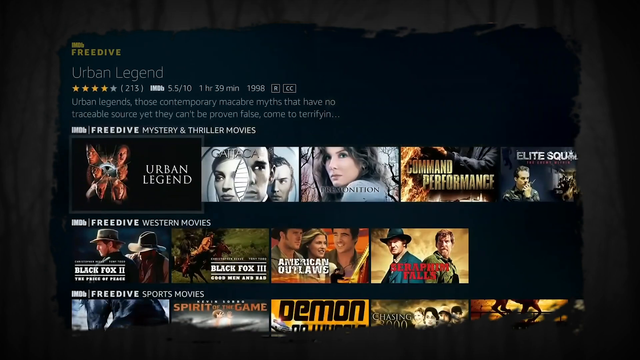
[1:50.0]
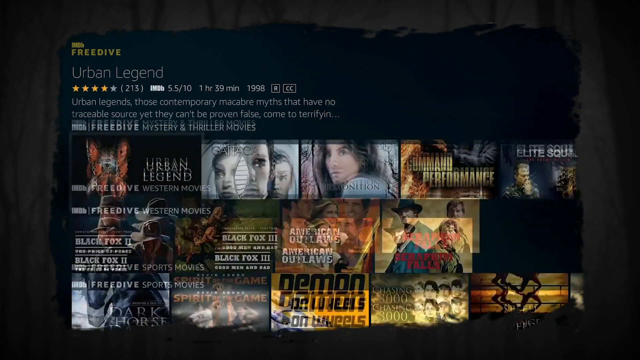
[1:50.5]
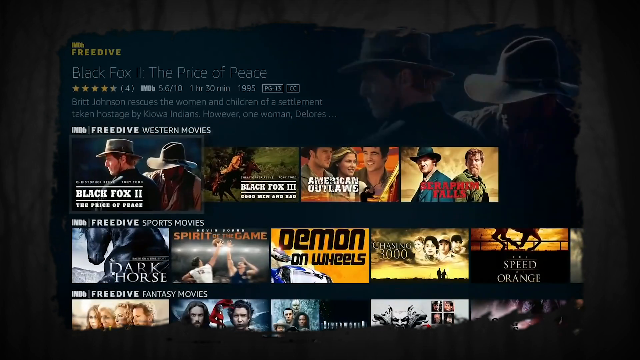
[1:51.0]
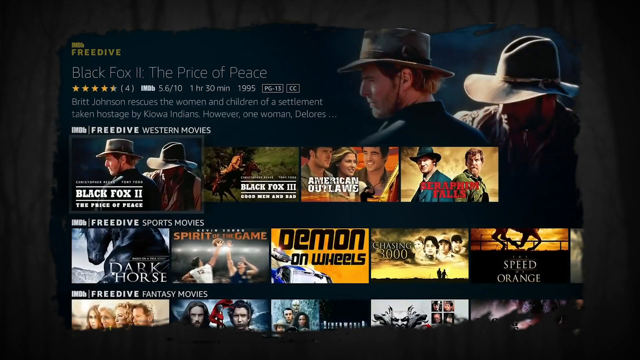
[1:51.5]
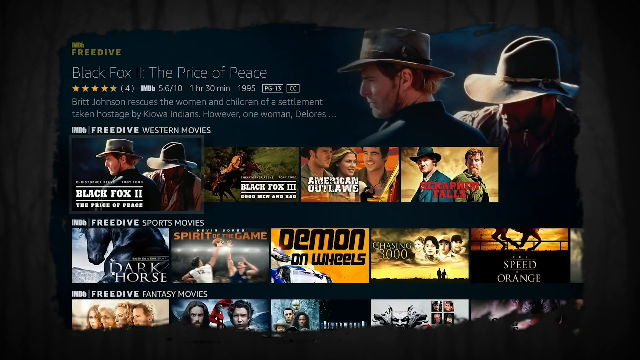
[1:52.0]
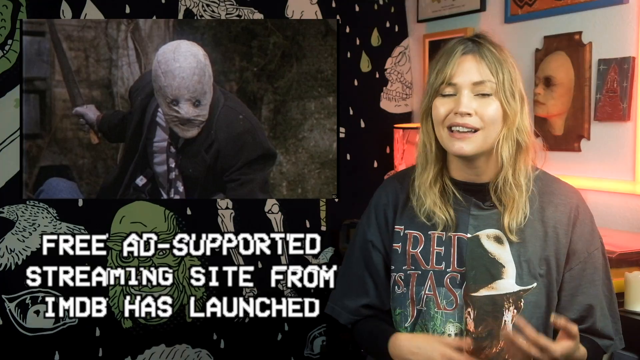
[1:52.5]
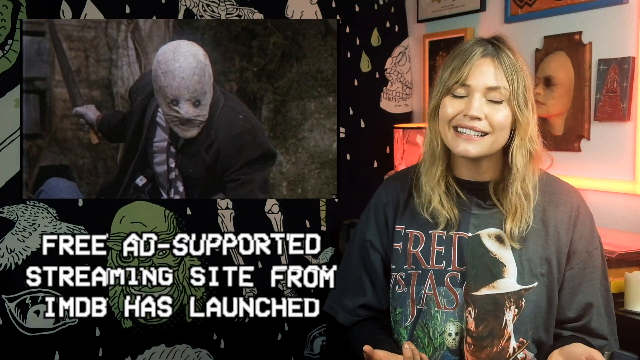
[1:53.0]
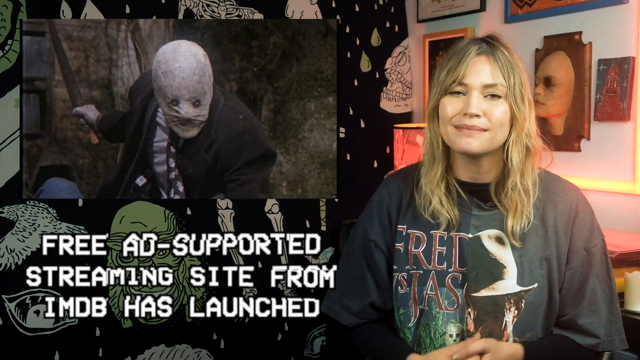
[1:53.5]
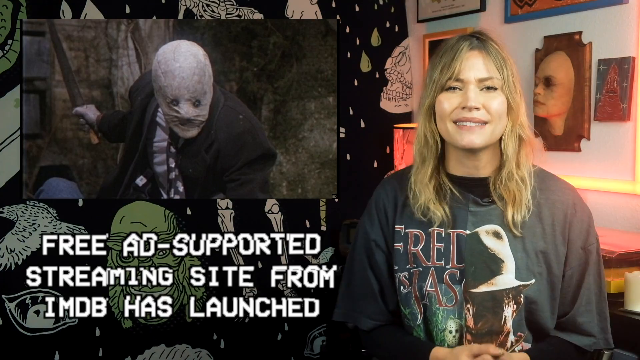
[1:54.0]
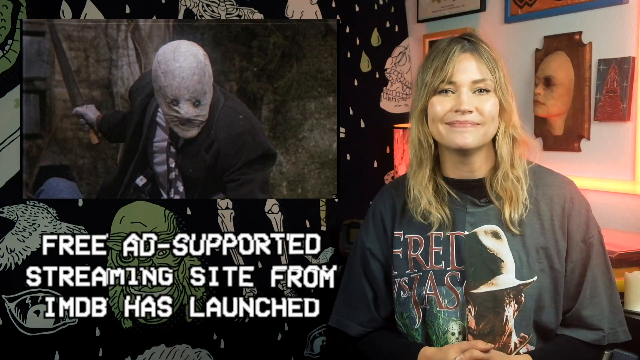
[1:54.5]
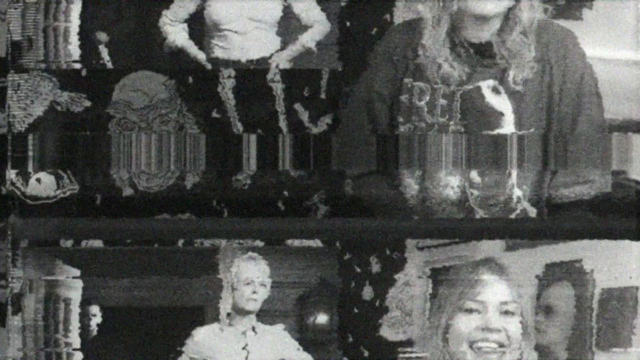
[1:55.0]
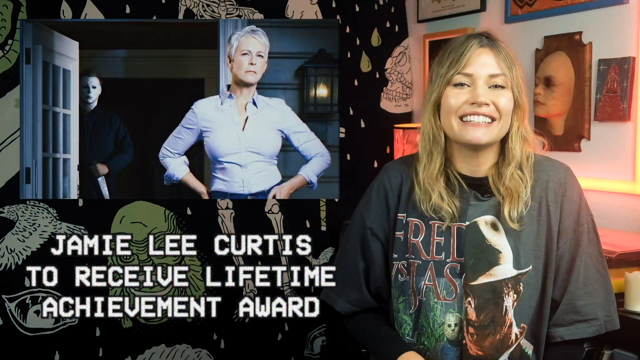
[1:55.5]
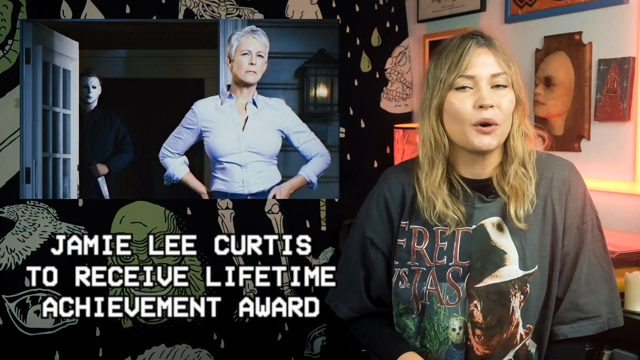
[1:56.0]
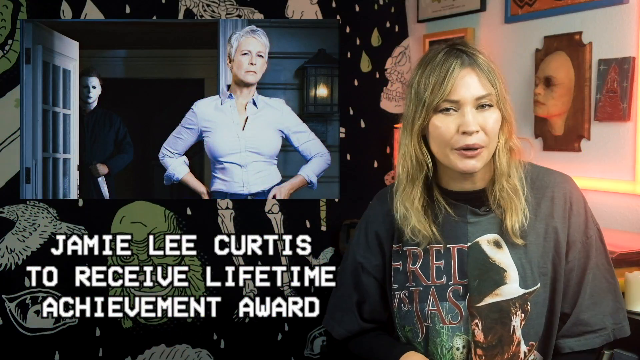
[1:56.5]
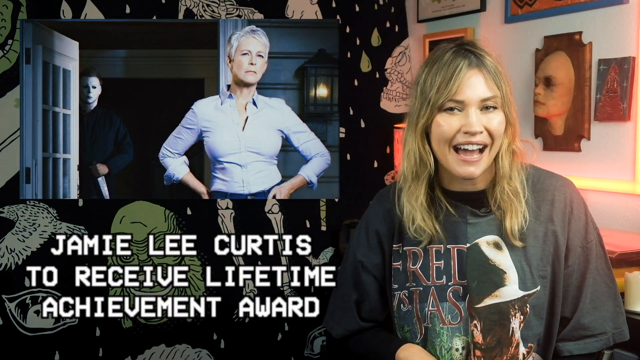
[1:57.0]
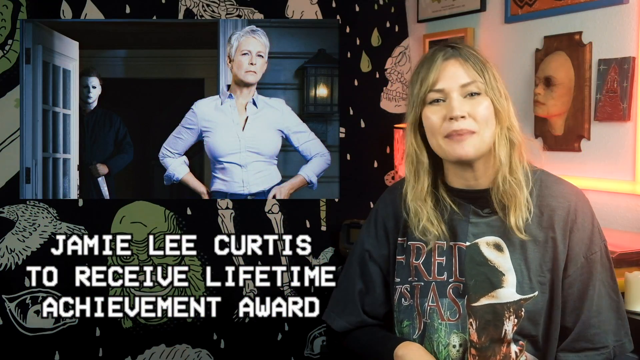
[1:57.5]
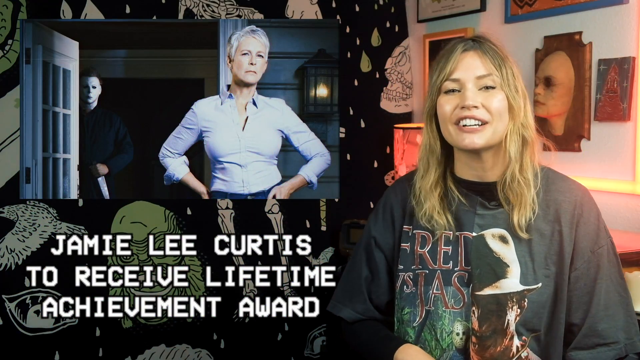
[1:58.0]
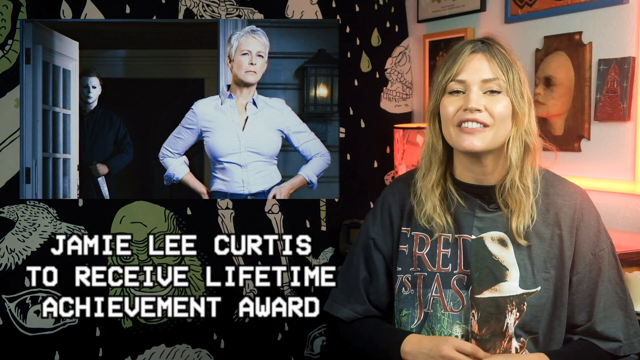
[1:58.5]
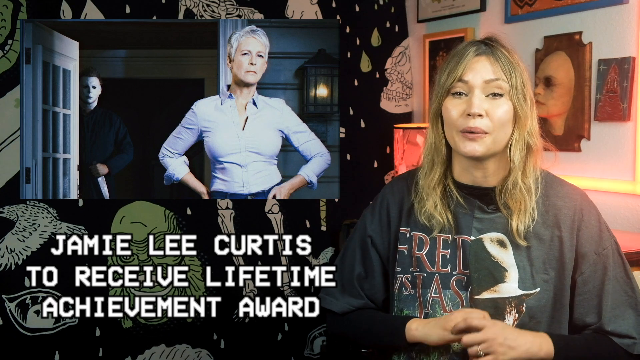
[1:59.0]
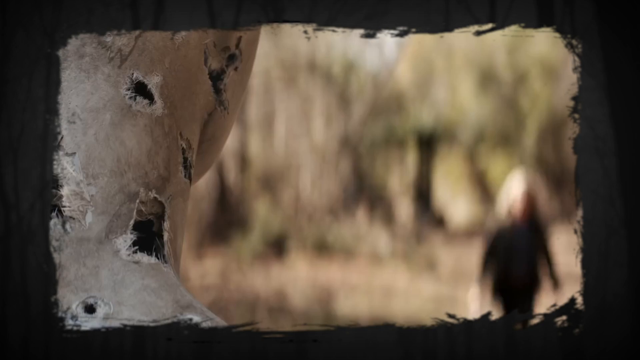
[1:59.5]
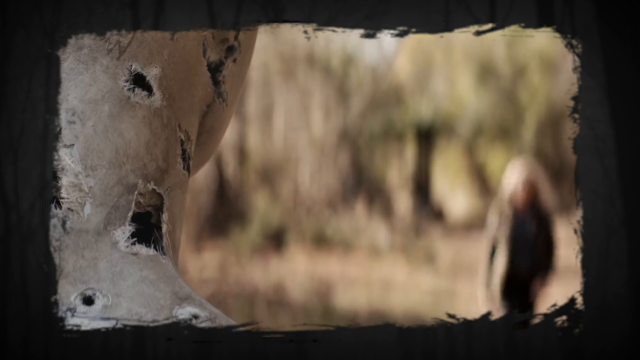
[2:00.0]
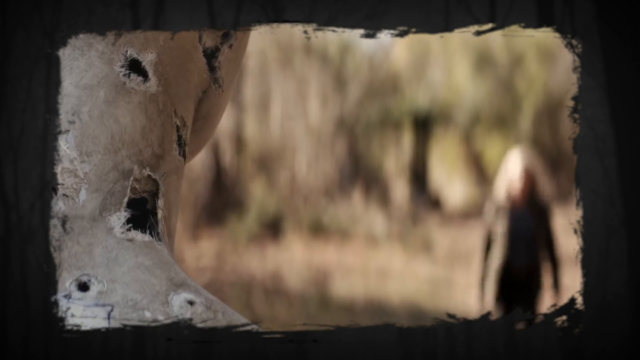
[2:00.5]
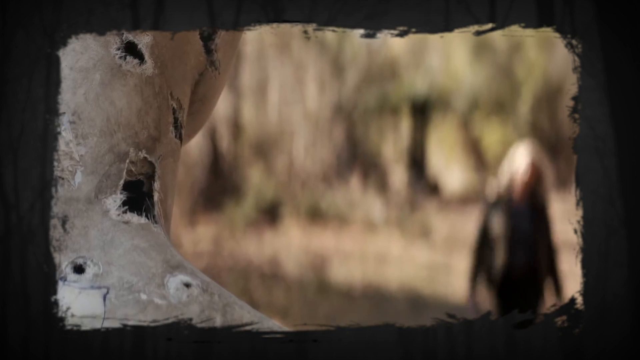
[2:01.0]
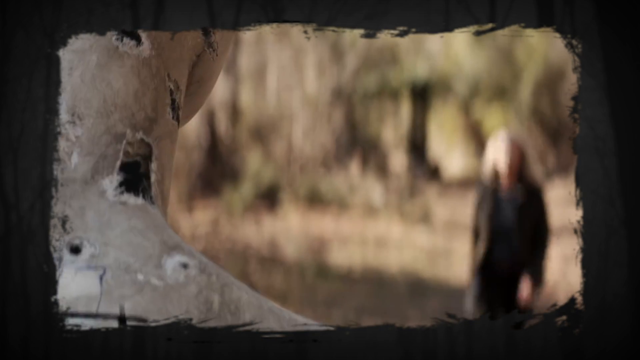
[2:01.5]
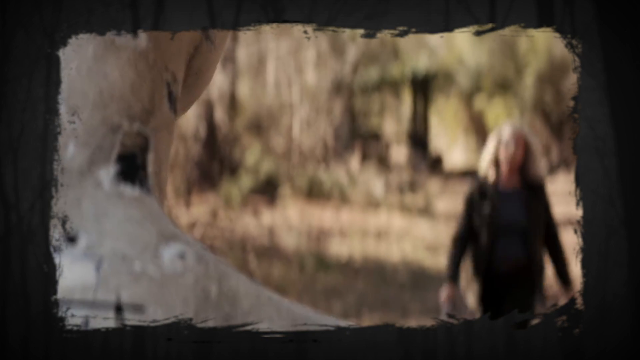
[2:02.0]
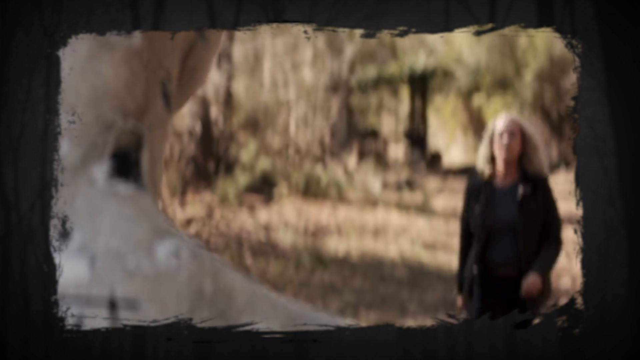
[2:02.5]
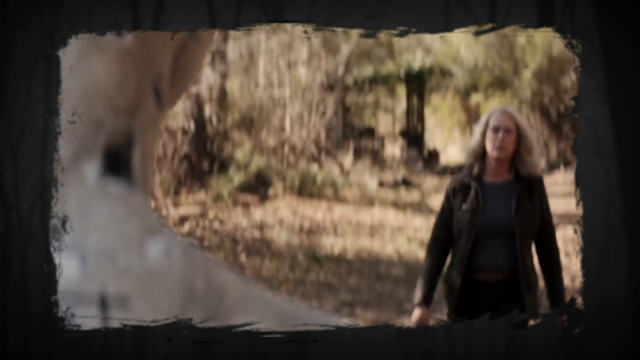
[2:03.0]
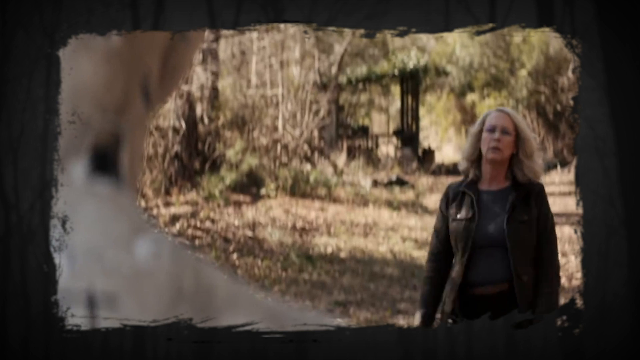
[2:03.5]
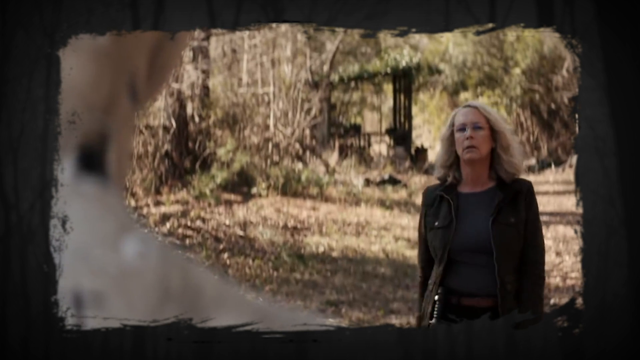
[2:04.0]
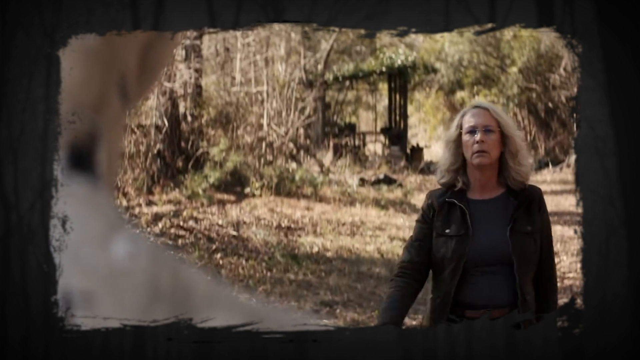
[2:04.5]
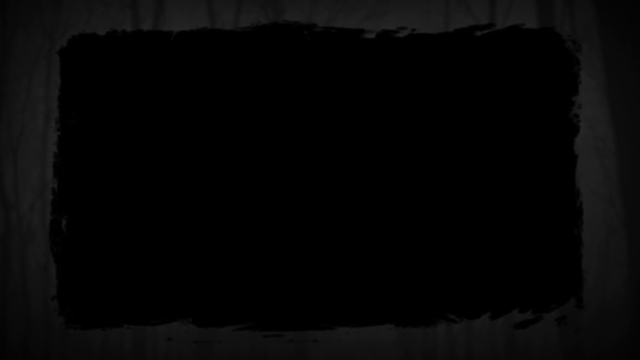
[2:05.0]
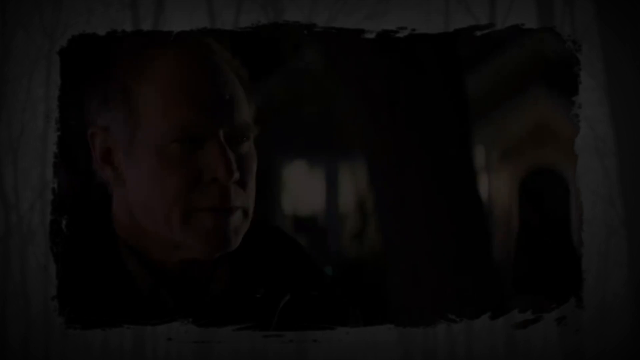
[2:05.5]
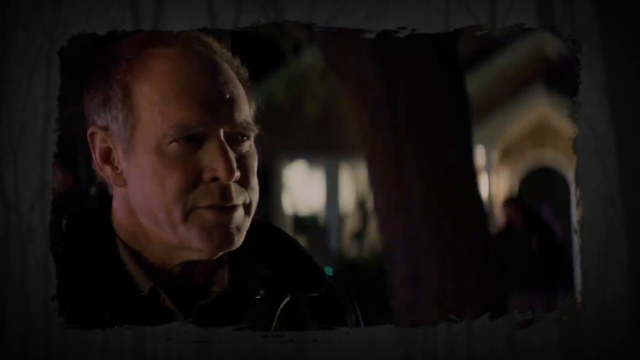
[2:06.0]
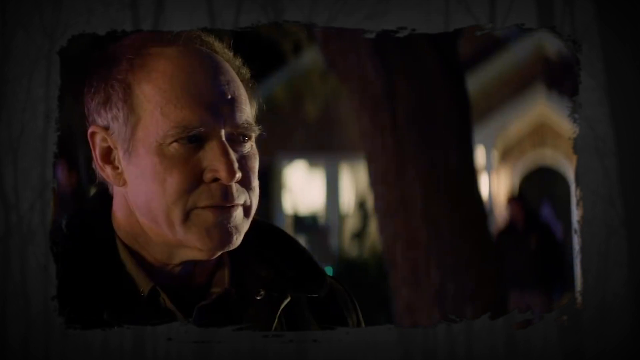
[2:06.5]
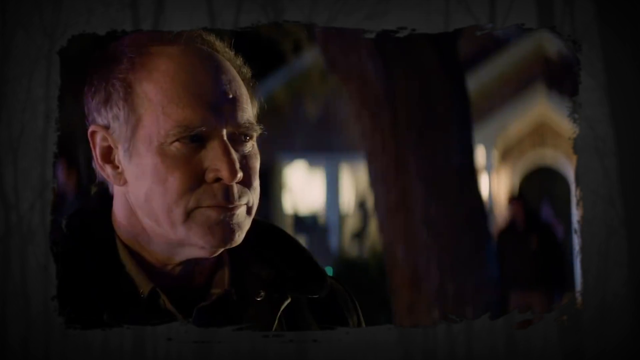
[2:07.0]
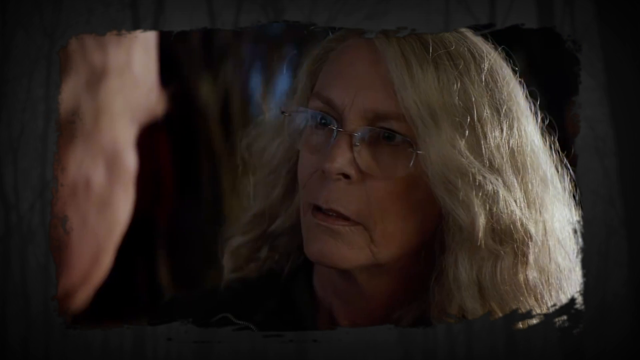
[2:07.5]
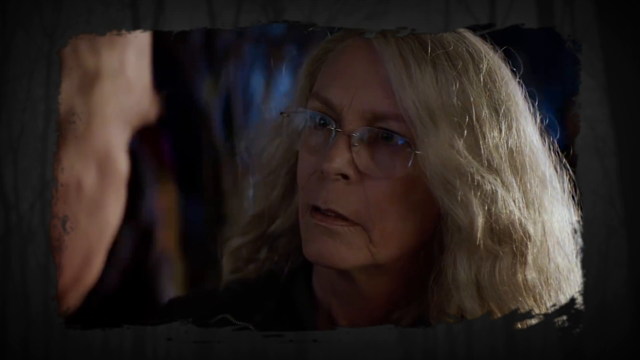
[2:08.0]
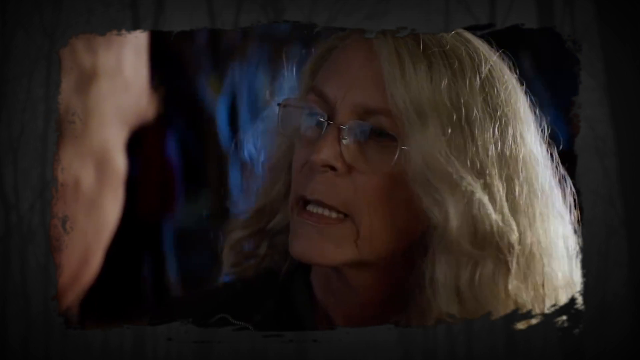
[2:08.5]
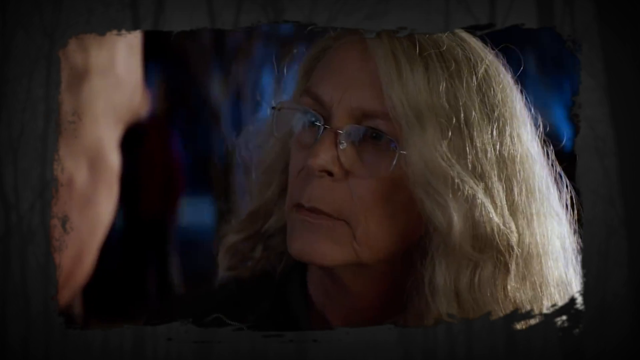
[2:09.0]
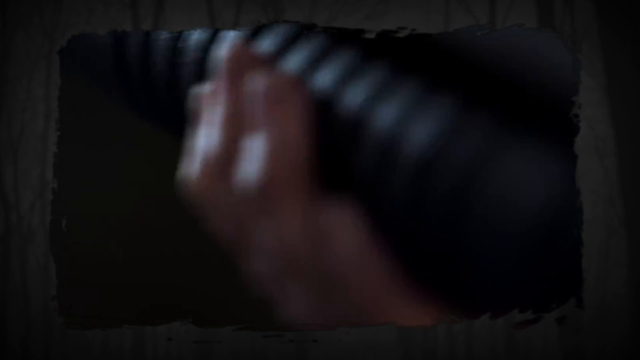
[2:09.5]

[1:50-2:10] The last of the movies on the site is shown, "Black Fox II." The topic moves to Jamie Lee Curtis receiving a Lifetime Achievement Award. A photo shows her wearing a blue shirt and blue jeans, and behind her is a guy wearing a white mask and holding a knife next to a white patterned door. Clips of her movie performances follow: in one, set in a bar or restaurant, she talks with a man and has a gun she is about to point at him, in an action-filled scene.